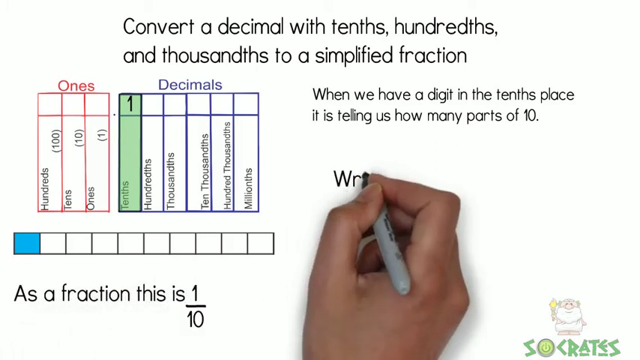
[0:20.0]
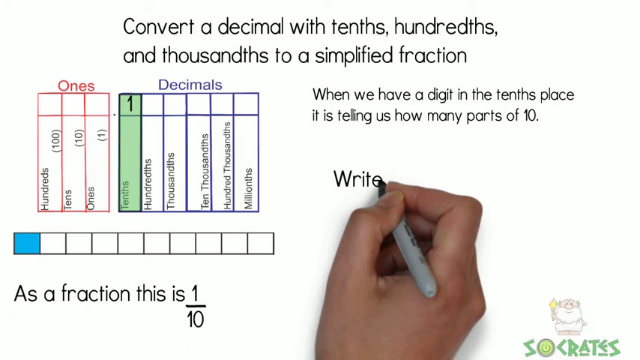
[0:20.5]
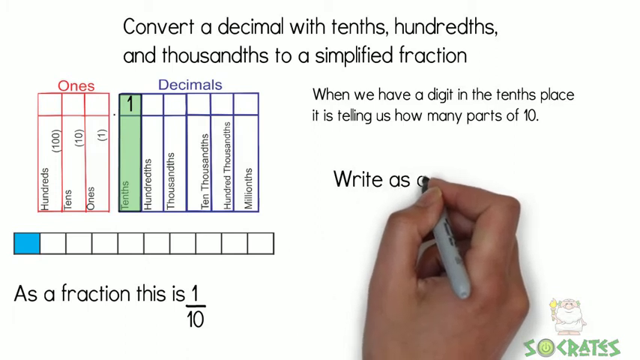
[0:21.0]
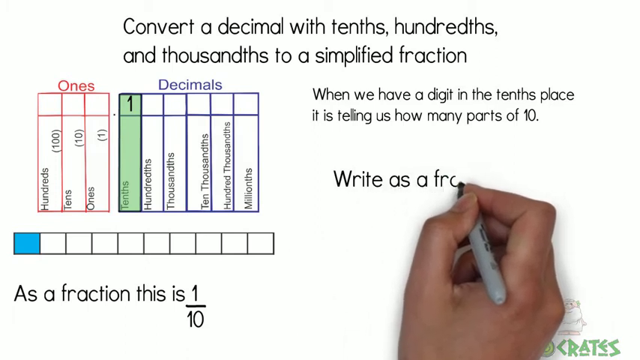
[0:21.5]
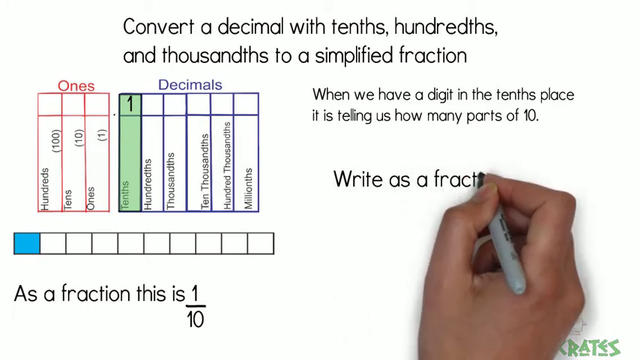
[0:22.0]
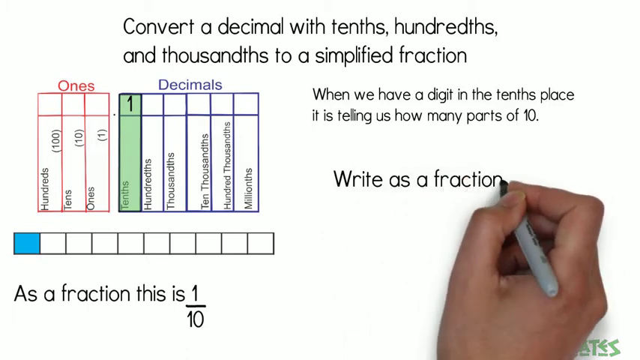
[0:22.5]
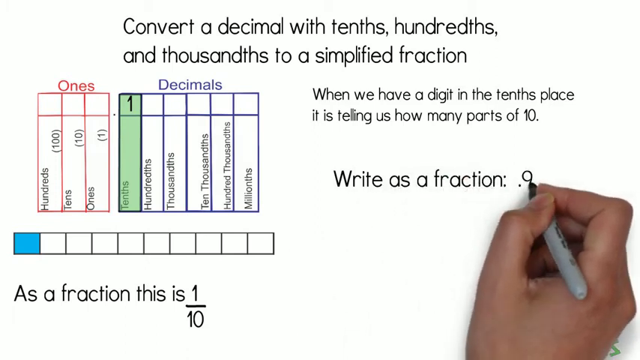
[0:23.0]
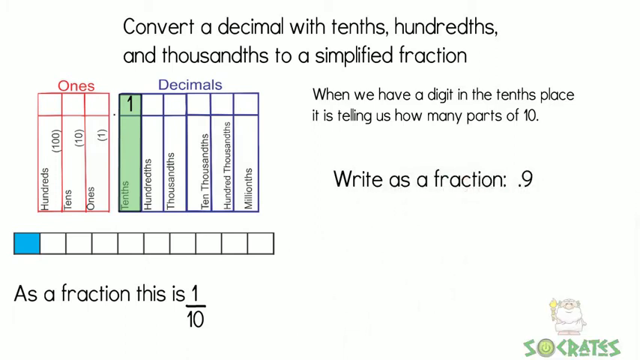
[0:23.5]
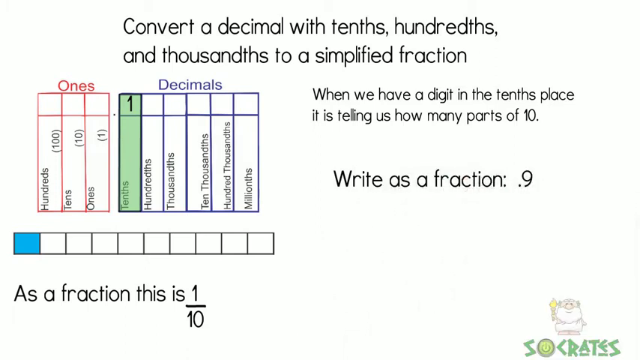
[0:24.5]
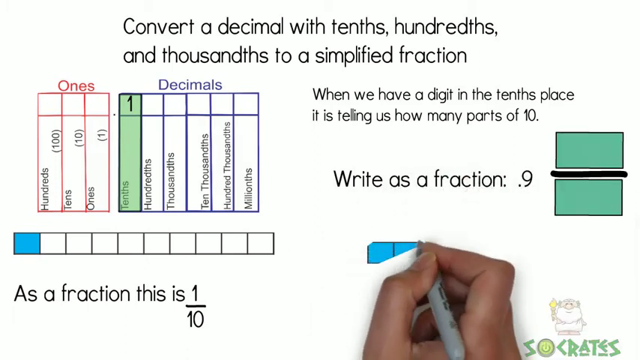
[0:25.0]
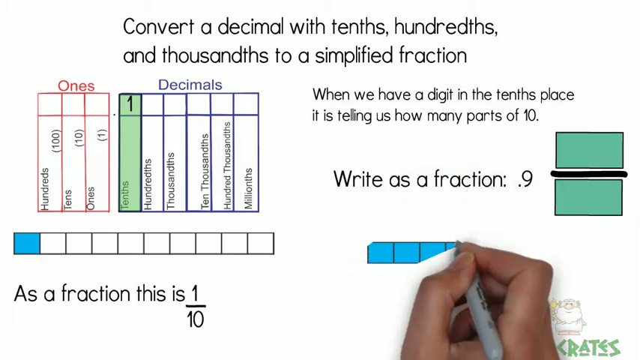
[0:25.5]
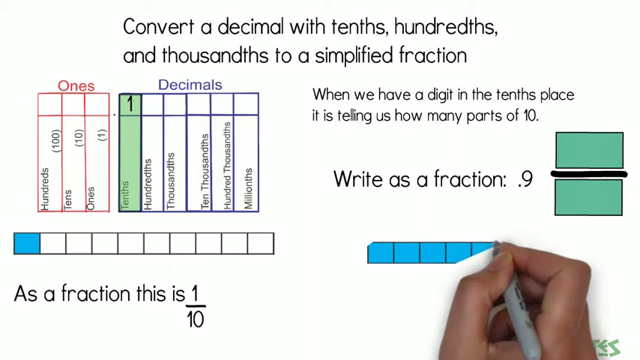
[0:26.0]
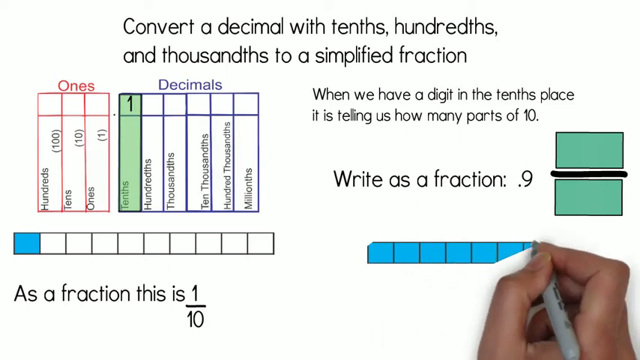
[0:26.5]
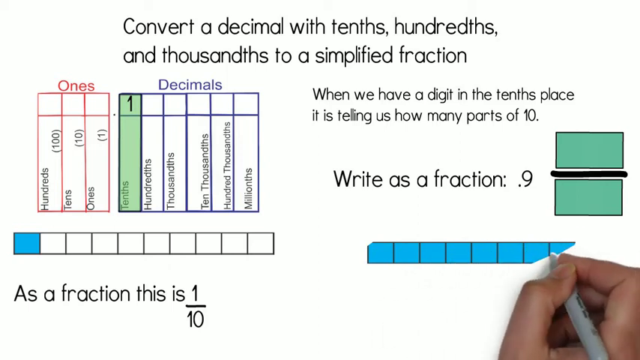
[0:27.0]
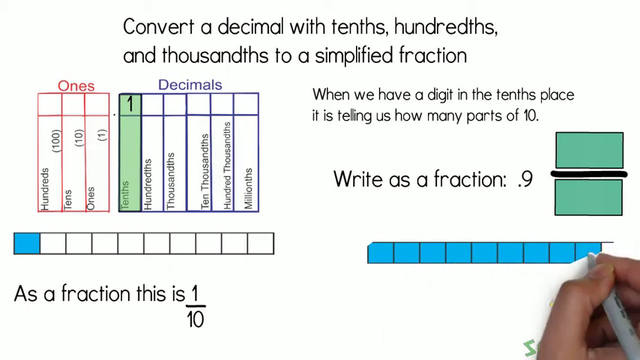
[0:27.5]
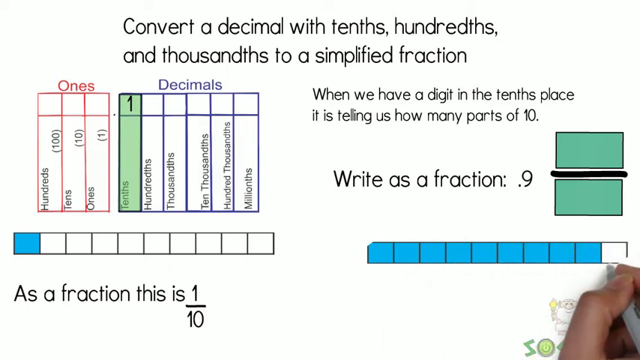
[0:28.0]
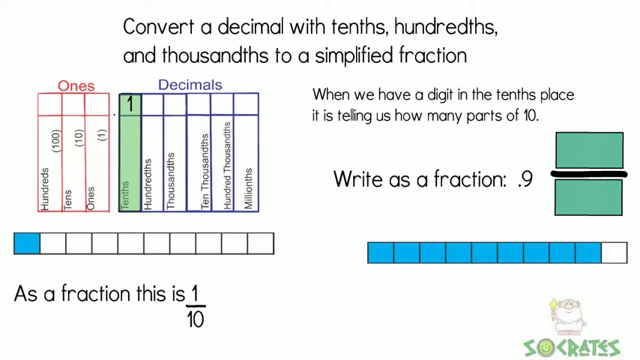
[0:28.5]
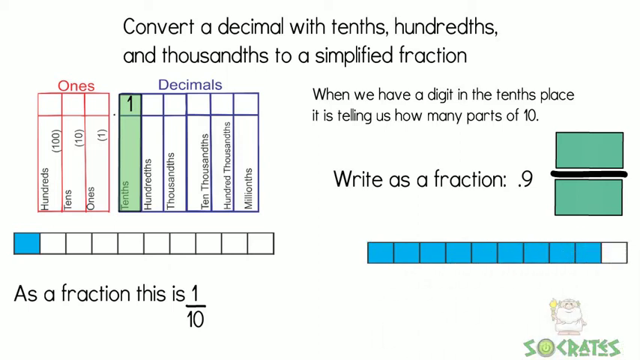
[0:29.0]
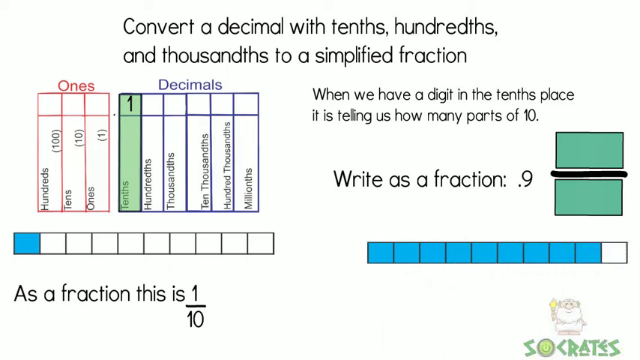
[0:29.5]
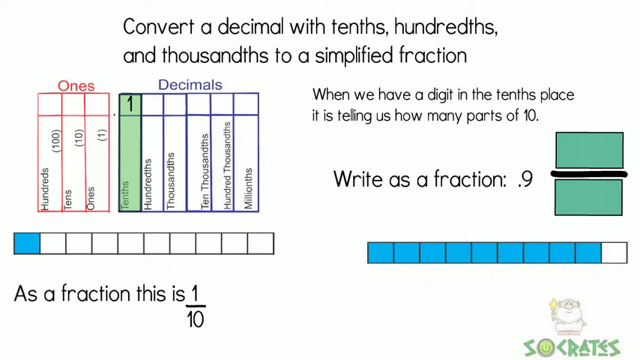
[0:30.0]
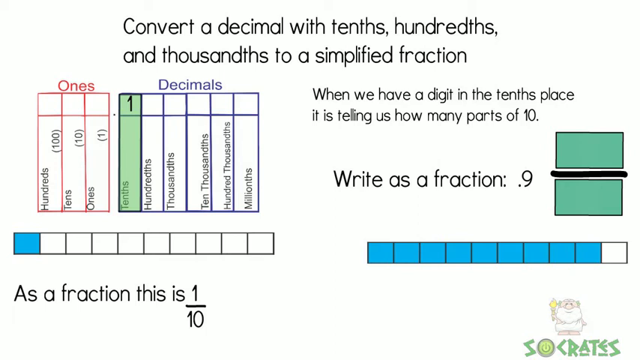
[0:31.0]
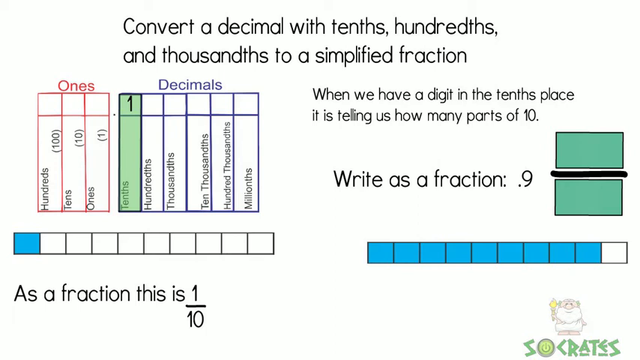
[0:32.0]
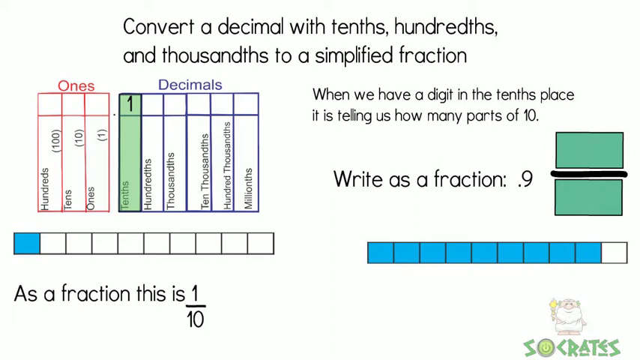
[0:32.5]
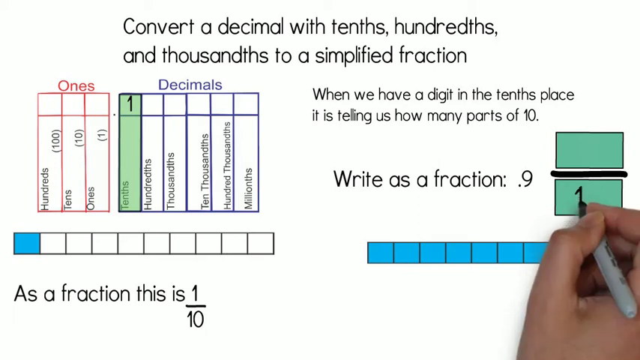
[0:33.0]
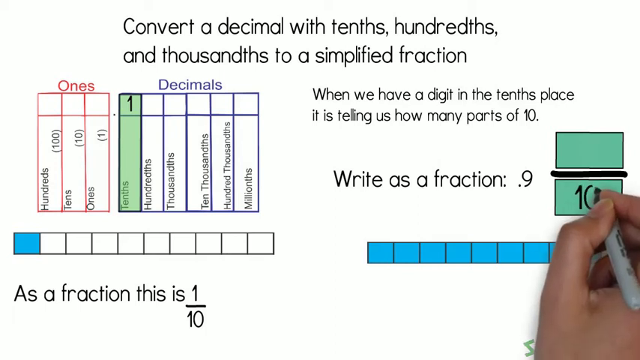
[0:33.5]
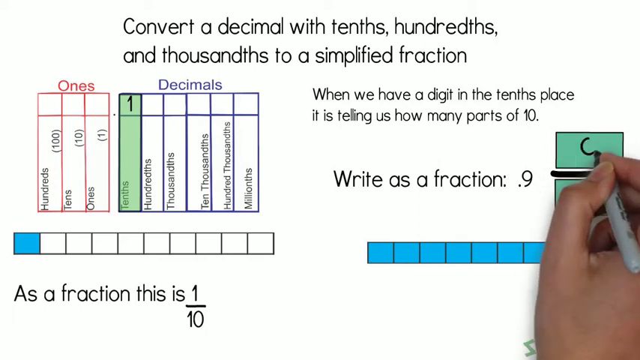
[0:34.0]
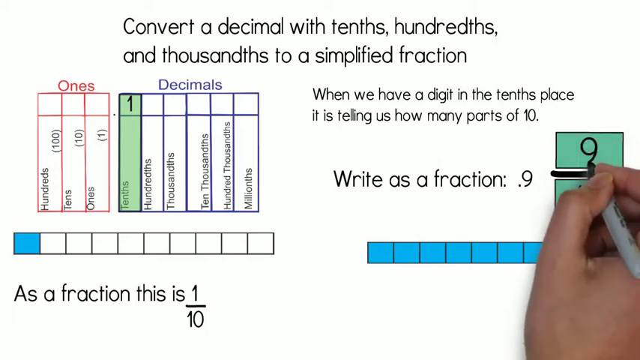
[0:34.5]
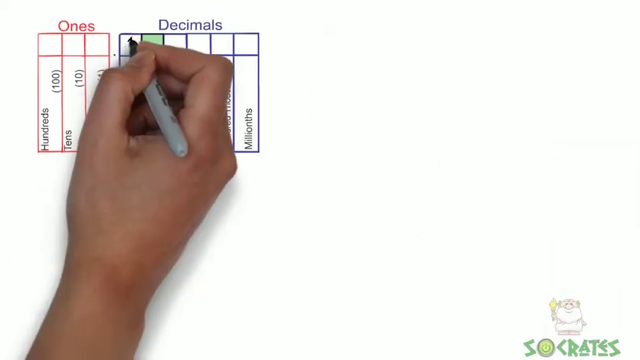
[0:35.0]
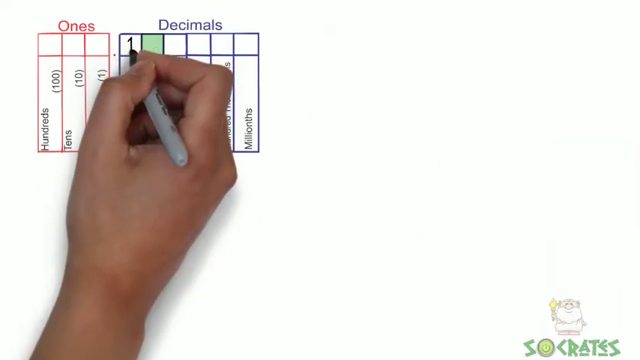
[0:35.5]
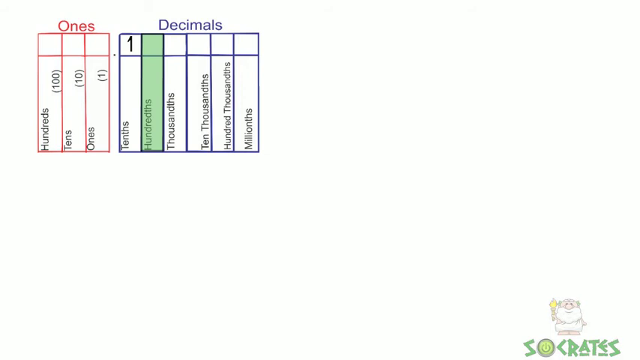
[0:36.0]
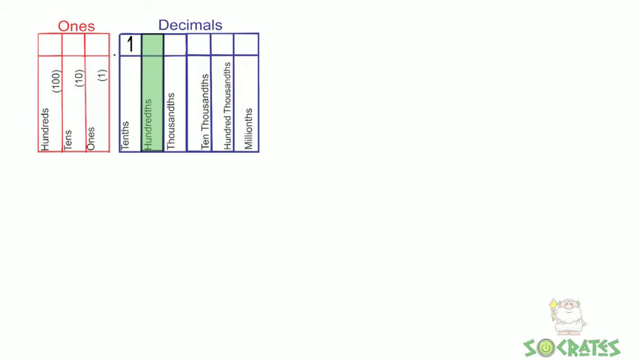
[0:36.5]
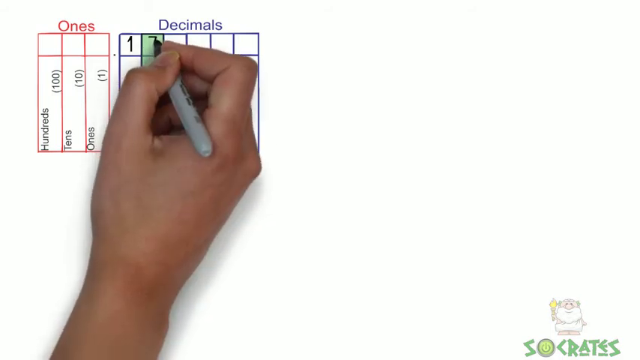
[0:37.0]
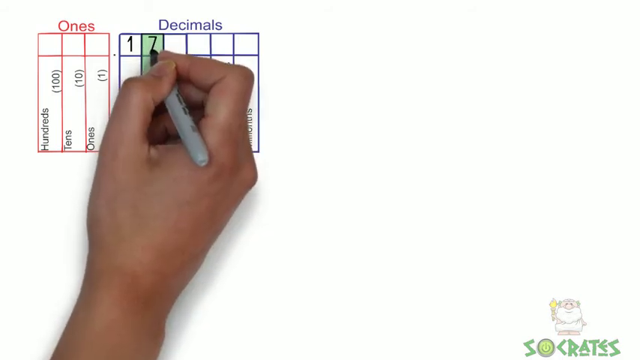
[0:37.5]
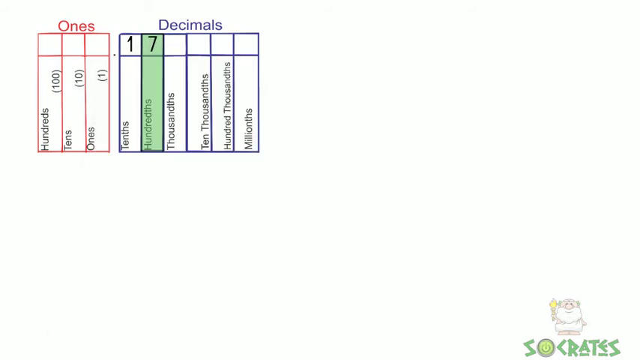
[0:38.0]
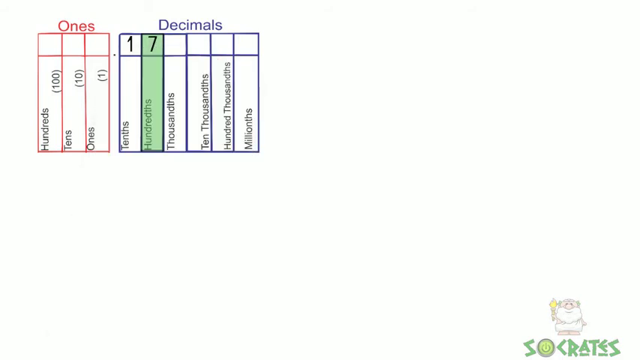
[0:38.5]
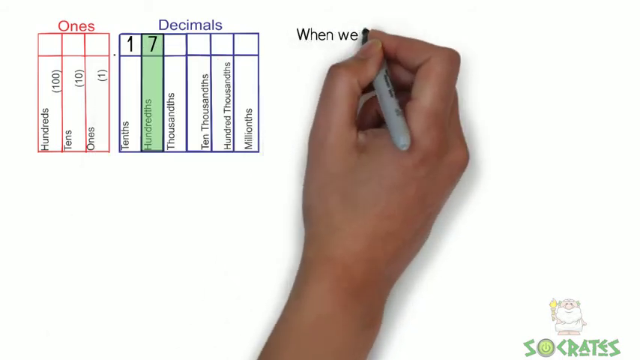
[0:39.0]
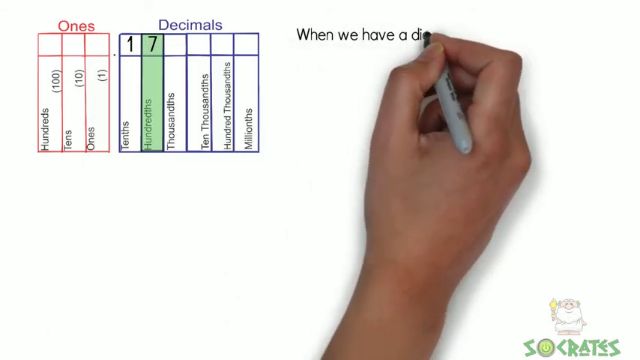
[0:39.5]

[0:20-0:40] On a whiteboard, a hand with a black pen has written the heading "converts a decimal with tenths, hundredths and thousandths to a simplified fraction." There are two tables: one has red lines and is labelled "ones"; the other has blue blocks and lines and is labelled "decimals". On the right is written "when we have a digit in the tenths place it is telling us how many parts of ten." At the bottom there are blocks with the first one highlighted in blue, and underneath is written "as a fraction this is 1 divided by 10." In the decimals blocks, a number 1 is written under tenths and highlighted in green. The hand continues writing "write as a fraction .9", and a row of 10 blocks appears with 9 of them highlighted in blue. The fraction 9 divided by 10 is written. Then a number 7 is added under hundredths in the decimals blocks and highlighted in green.